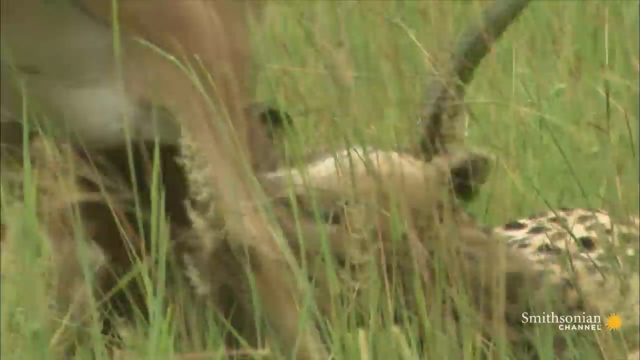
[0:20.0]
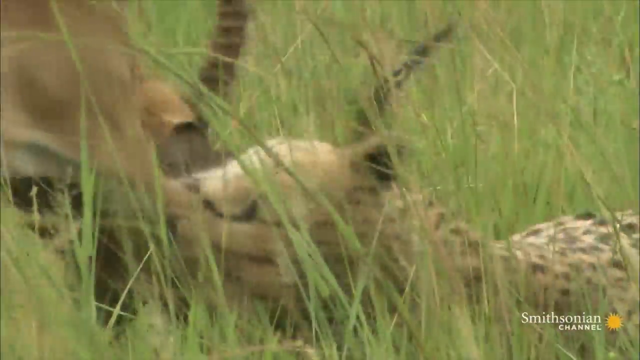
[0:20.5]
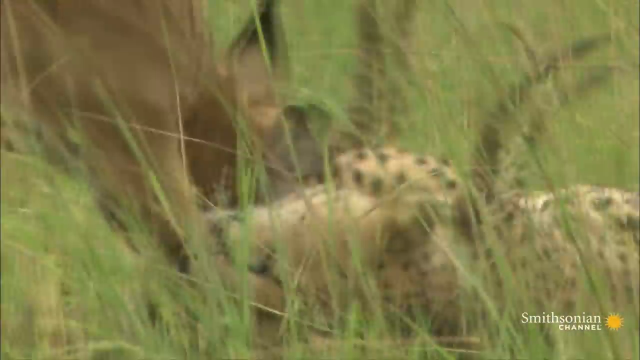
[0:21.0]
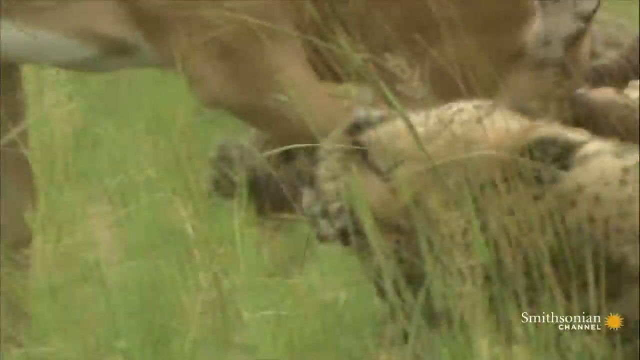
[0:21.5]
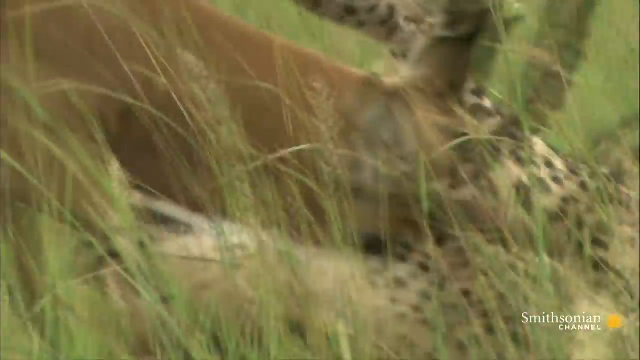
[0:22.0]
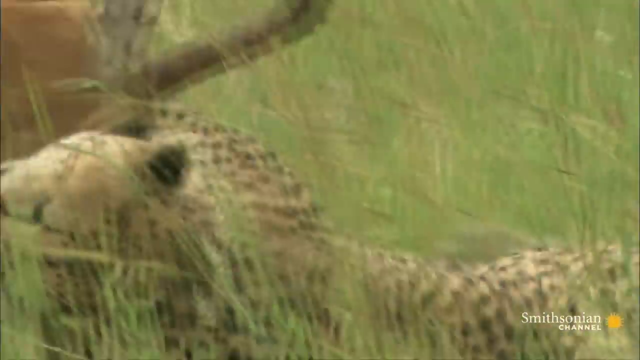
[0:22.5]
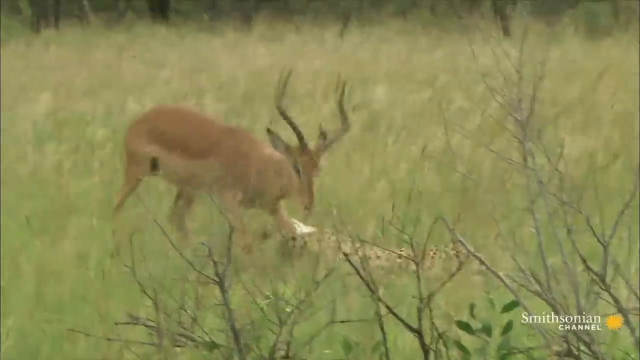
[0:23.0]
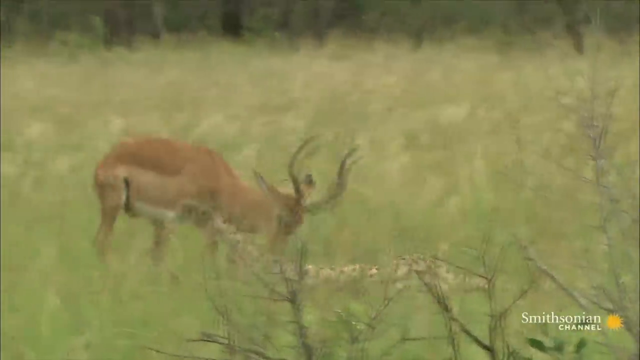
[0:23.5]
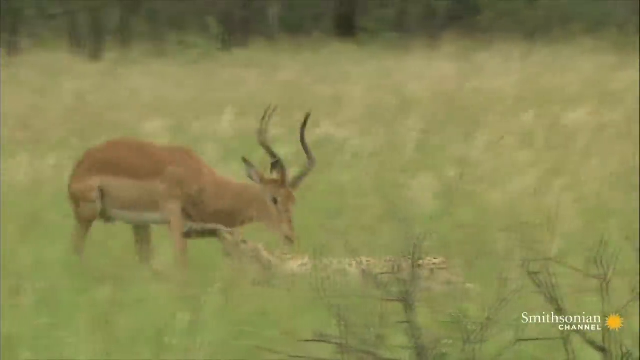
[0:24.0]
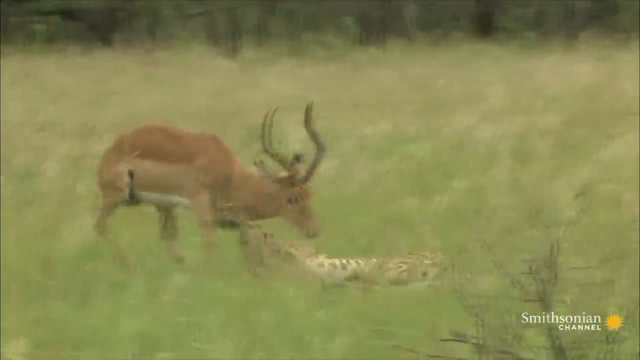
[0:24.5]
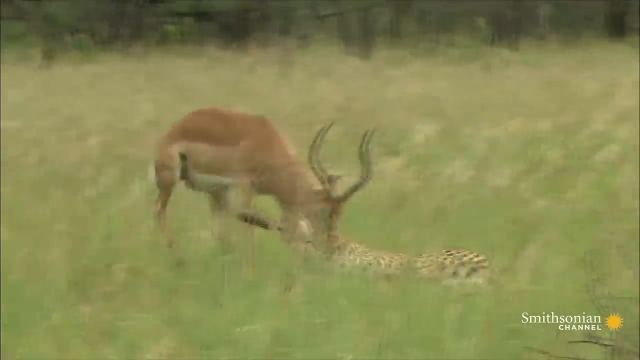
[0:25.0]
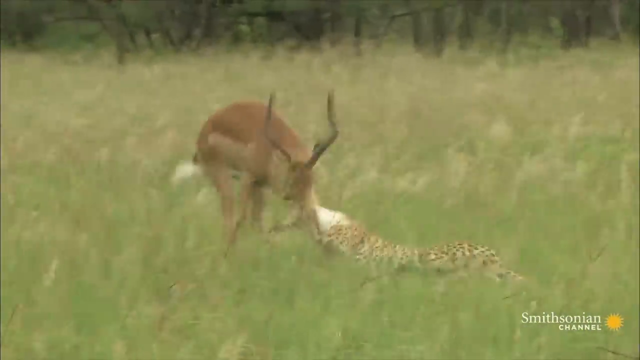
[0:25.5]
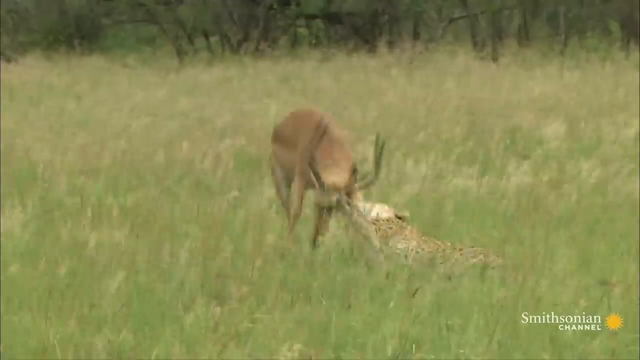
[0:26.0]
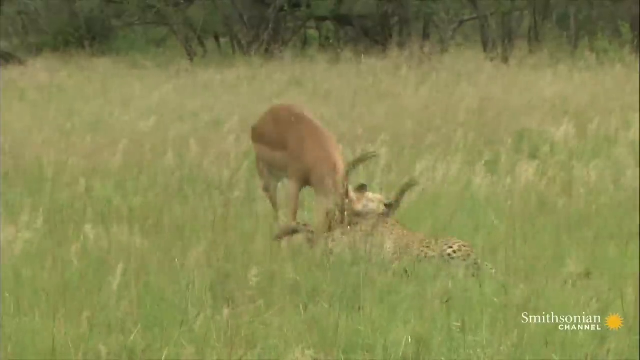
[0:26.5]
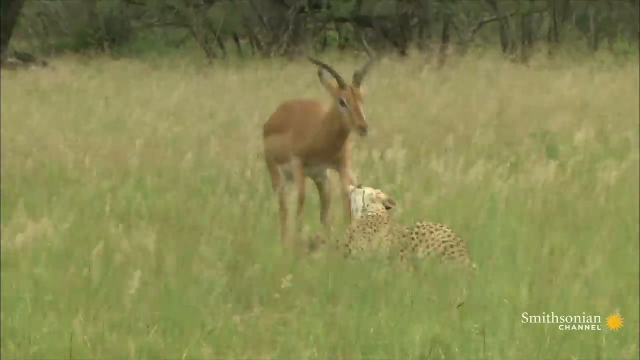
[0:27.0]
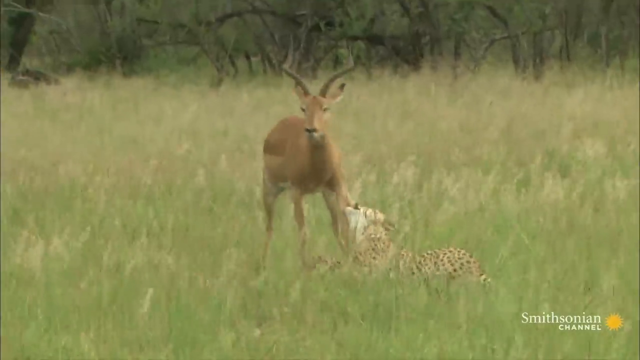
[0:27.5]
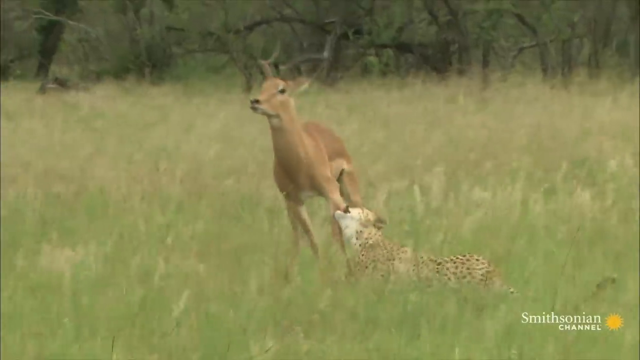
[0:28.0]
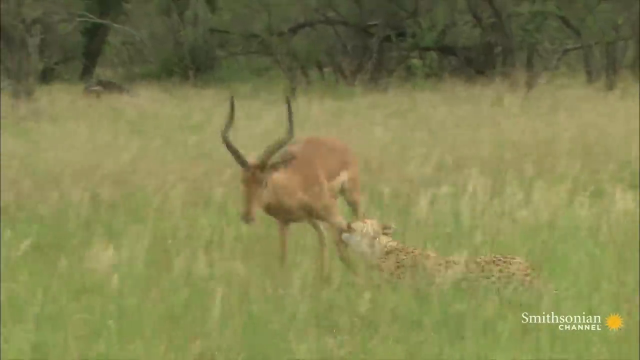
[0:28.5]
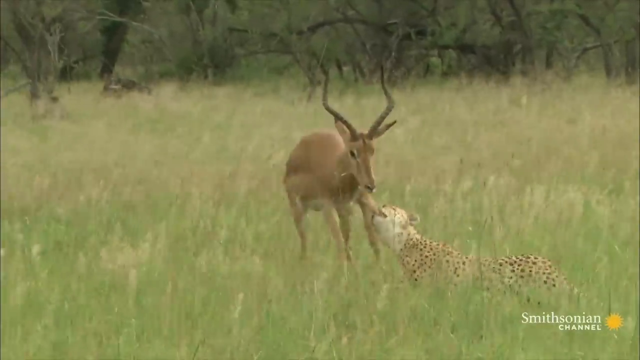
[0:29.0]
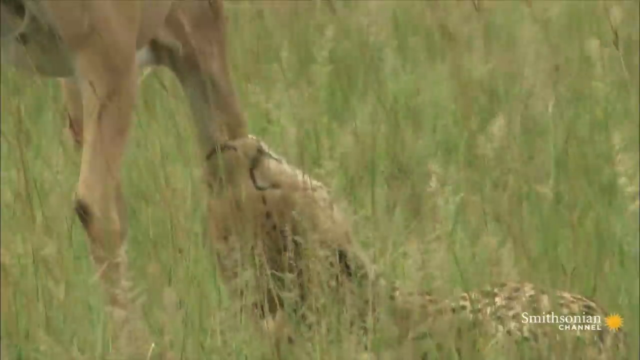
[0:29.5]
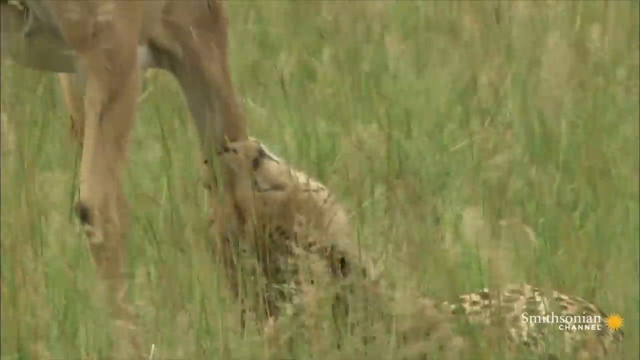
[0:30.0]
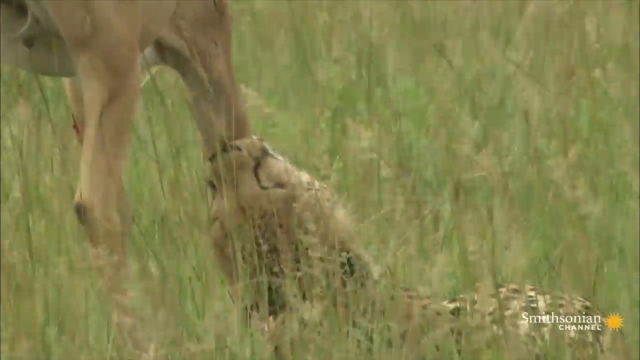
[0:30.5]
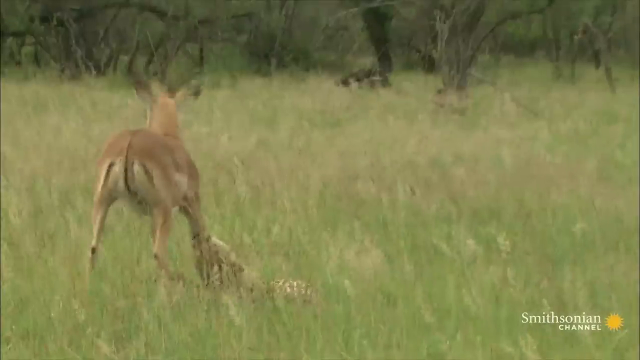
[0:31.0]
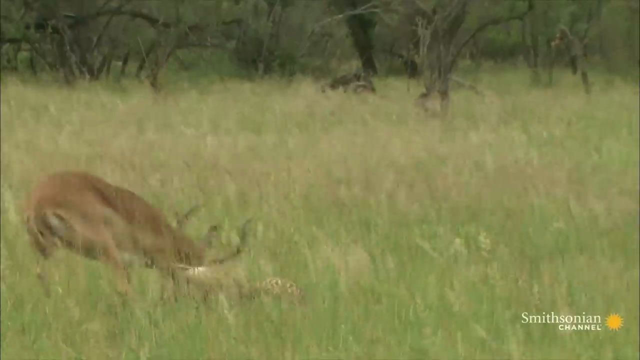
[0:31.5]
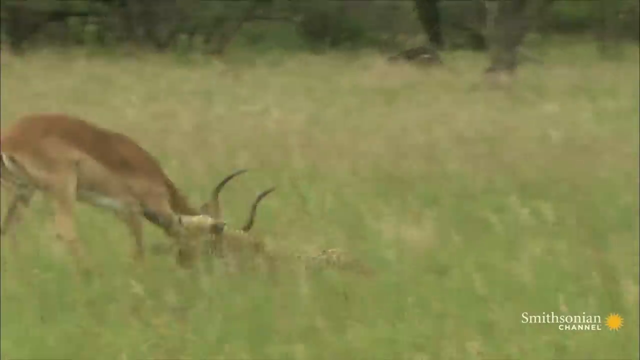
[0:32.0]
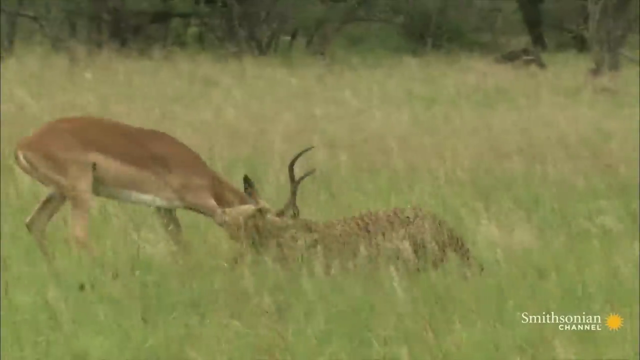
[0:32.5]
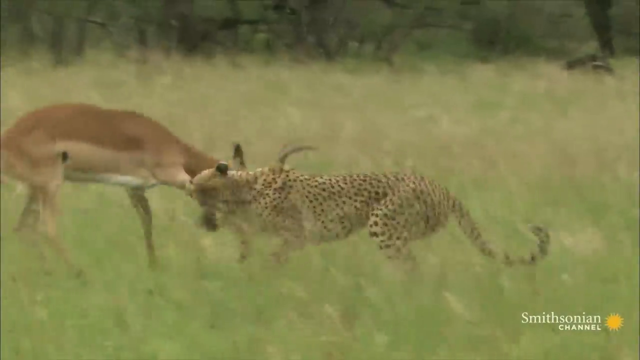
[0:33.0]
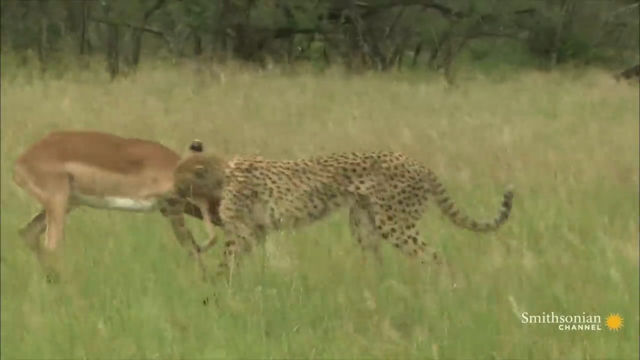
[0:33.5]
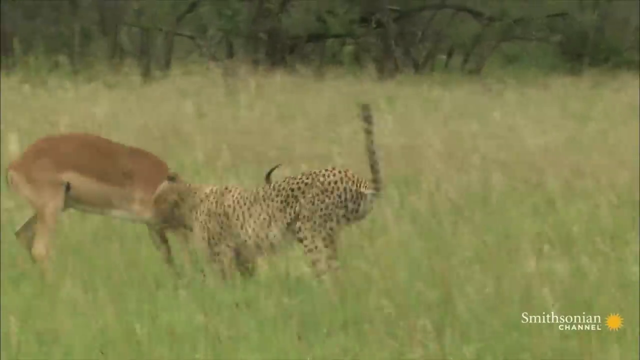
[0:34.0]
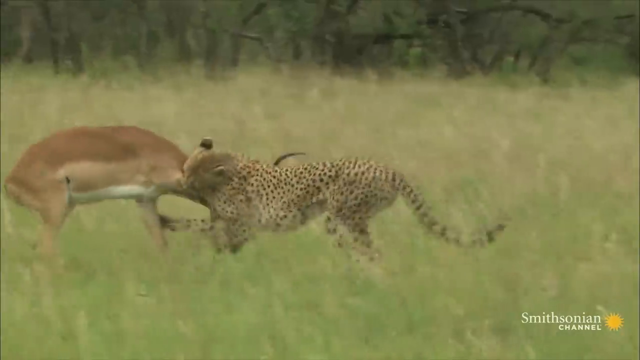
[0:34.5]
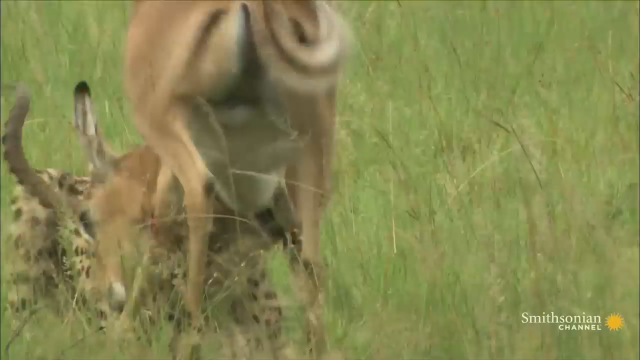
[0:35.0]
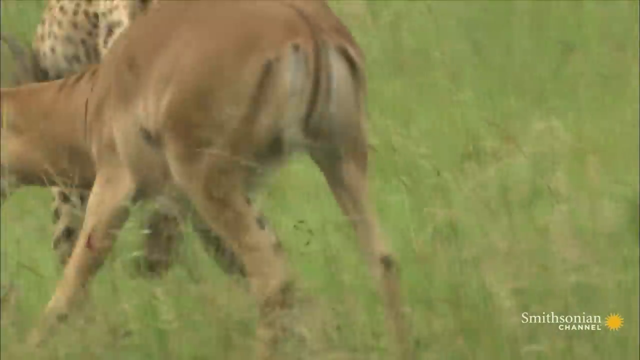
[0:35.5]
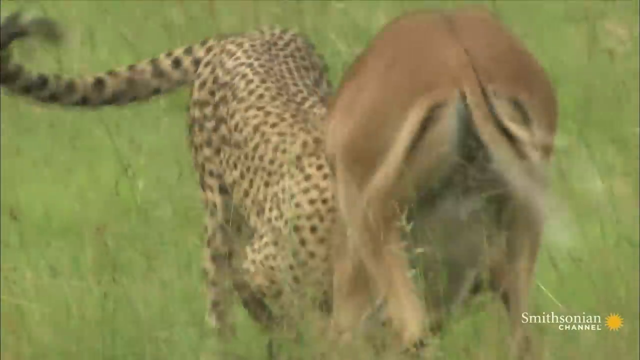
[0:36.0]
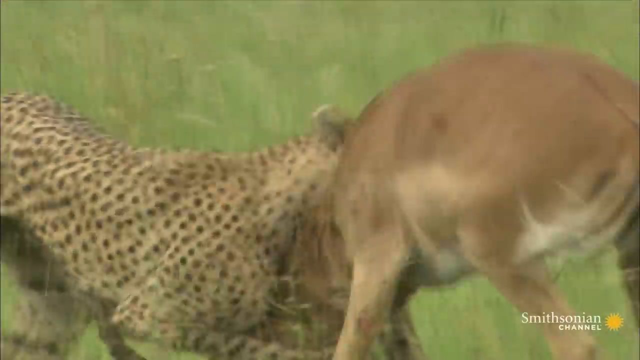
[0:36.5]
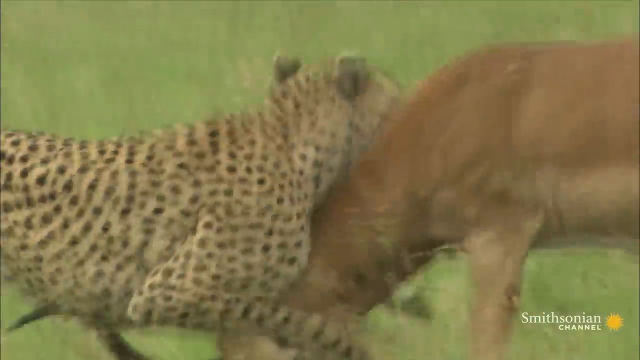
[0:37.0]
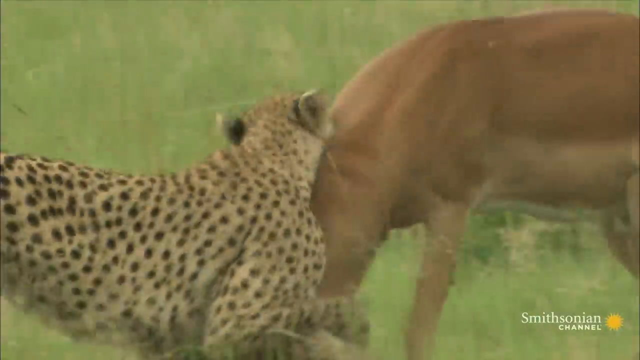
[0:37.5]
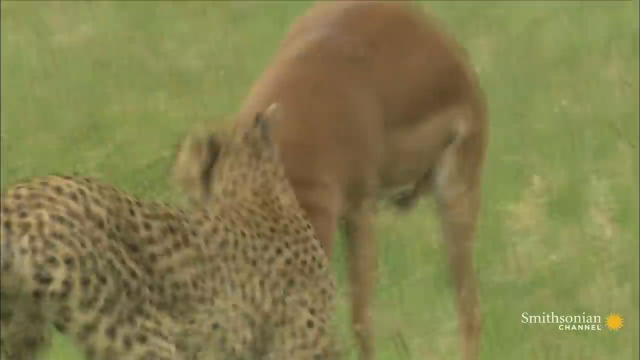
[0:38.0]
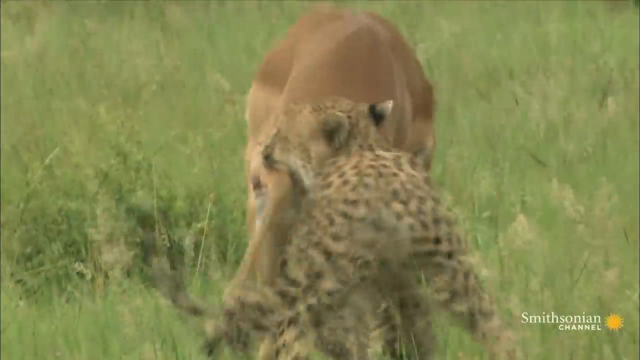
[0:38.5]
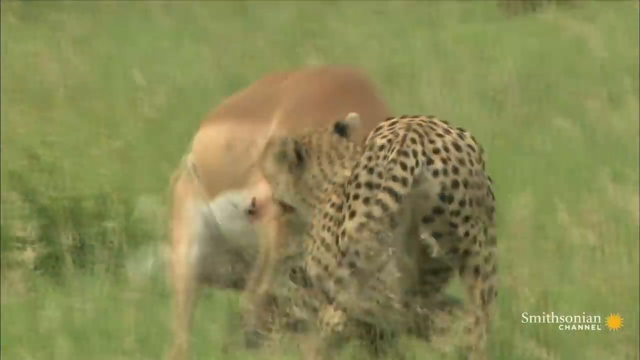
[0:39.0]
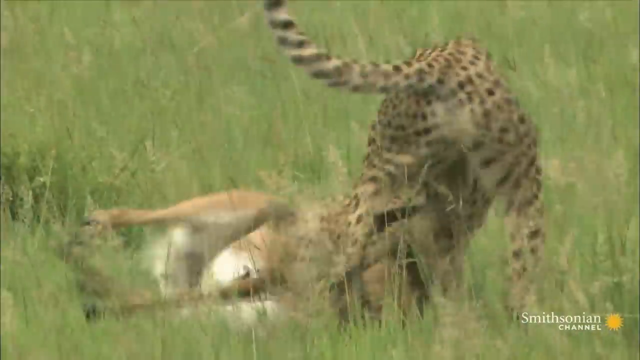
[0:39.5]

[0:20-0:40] The action becomes clearer: a mother cheetah is hunting an impala. The cheetah gets a strong grip on the impala's right leg, and the two hop around as the impala tries to get away while the cheetah holds on tightly. The setting stays mostly in the same place outside in the forest. Different angles show the cheetah and the impala fighting, including very close-up shots. A little of the trees is visible in the background, and it is a very windy day.